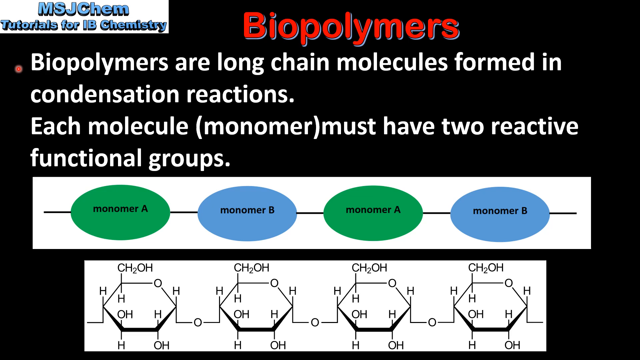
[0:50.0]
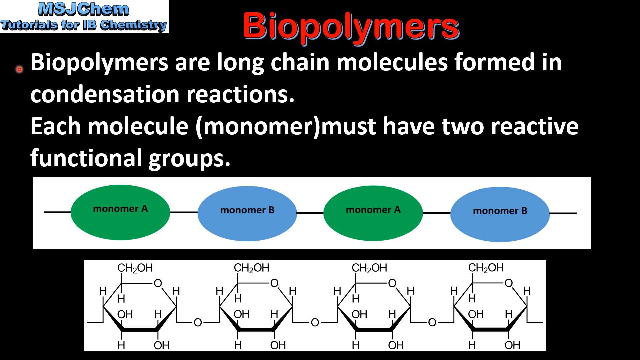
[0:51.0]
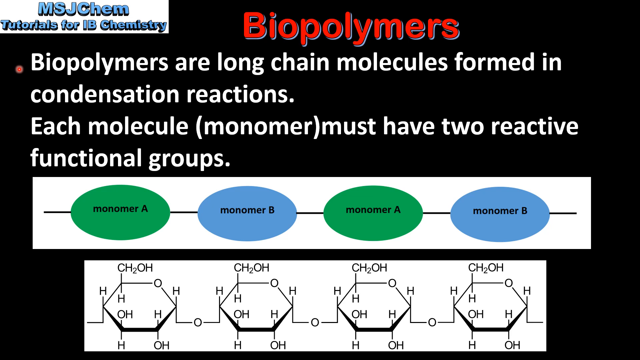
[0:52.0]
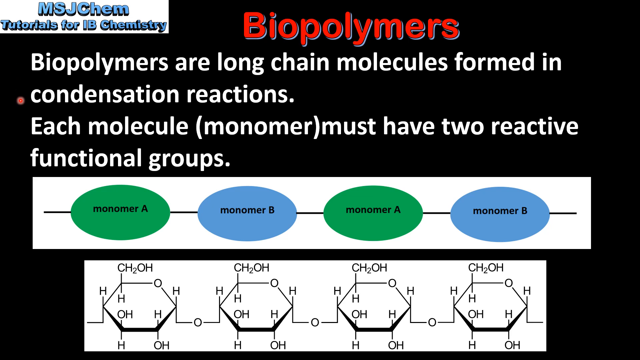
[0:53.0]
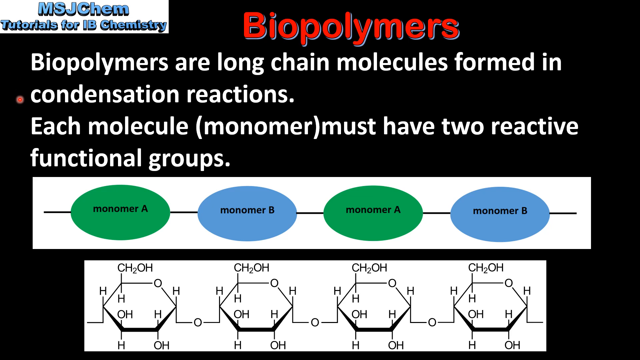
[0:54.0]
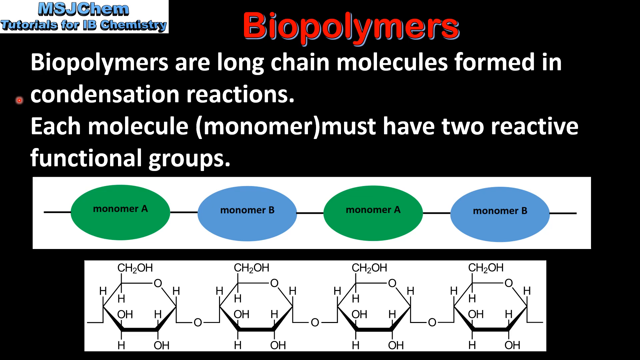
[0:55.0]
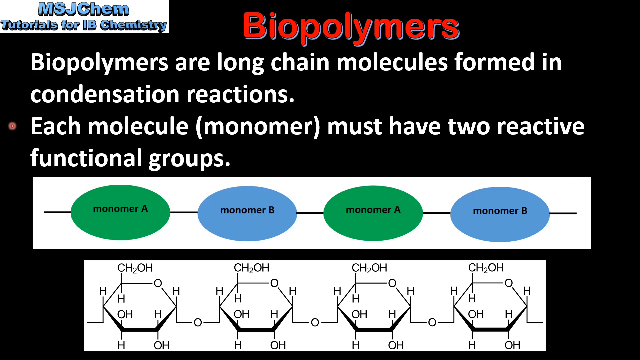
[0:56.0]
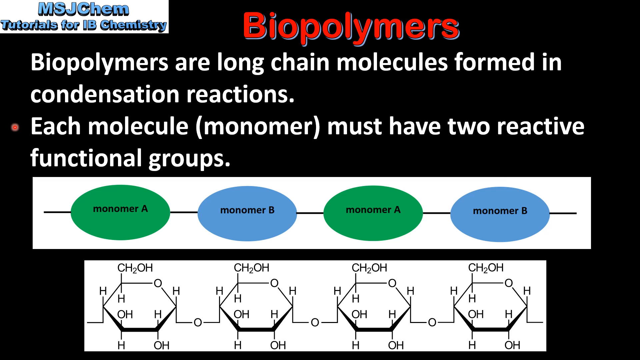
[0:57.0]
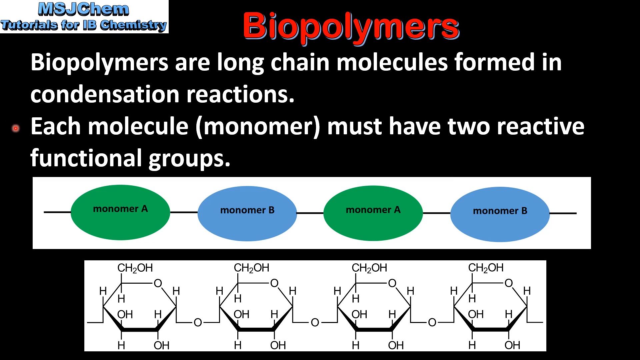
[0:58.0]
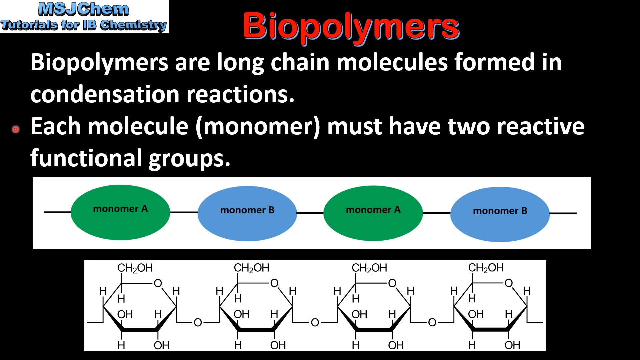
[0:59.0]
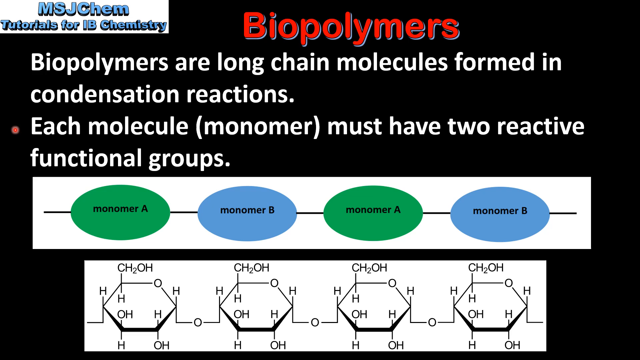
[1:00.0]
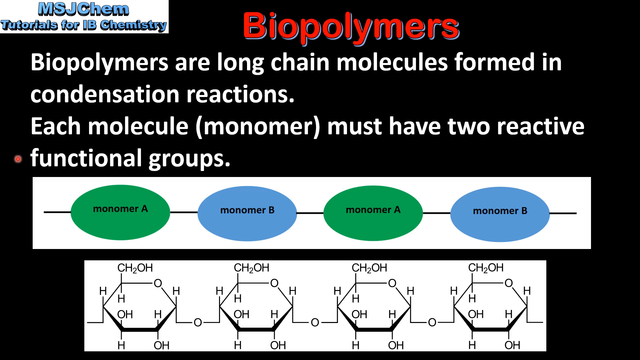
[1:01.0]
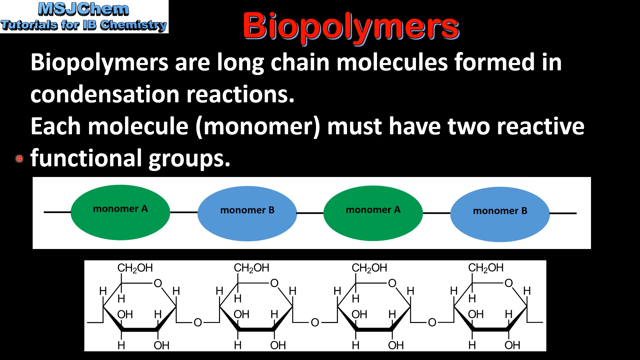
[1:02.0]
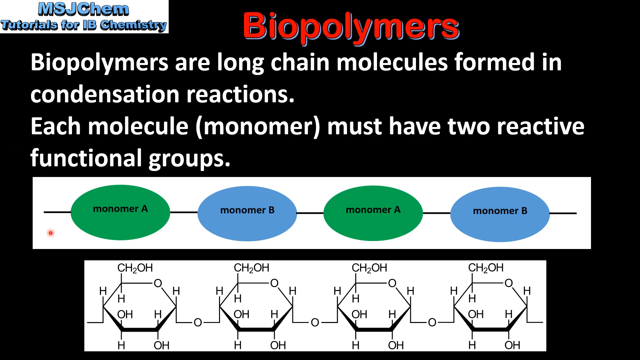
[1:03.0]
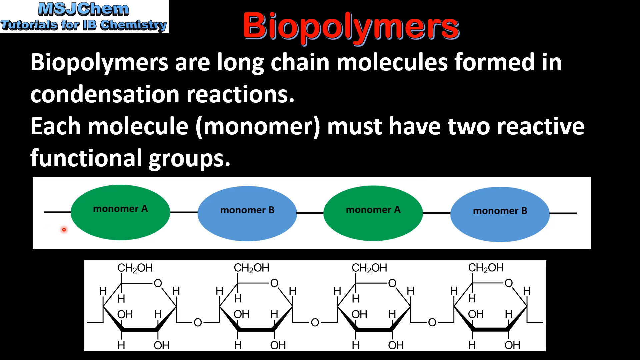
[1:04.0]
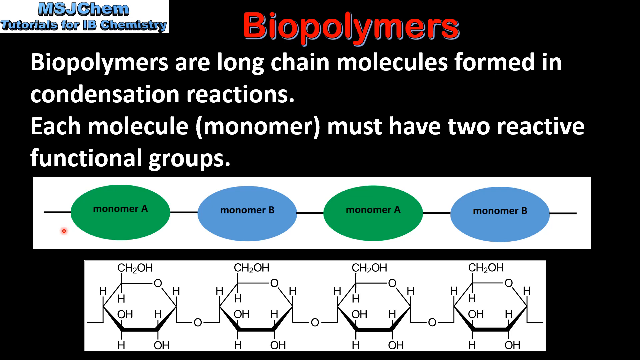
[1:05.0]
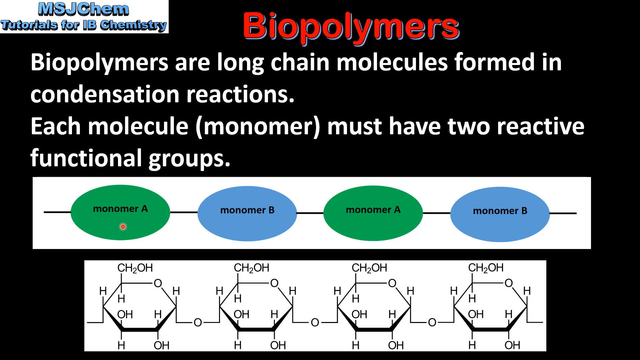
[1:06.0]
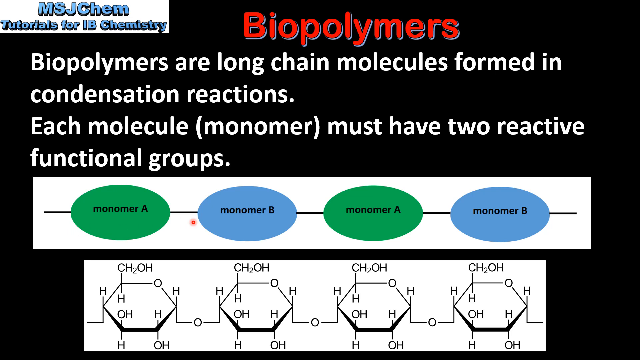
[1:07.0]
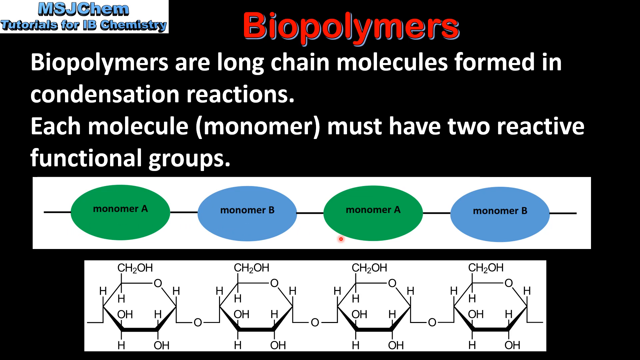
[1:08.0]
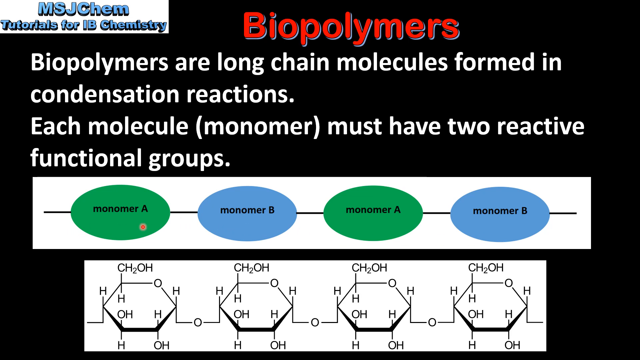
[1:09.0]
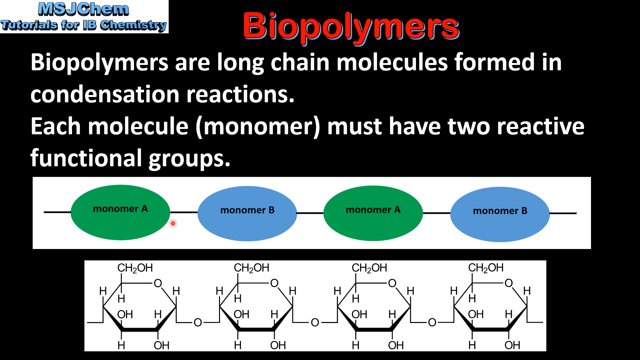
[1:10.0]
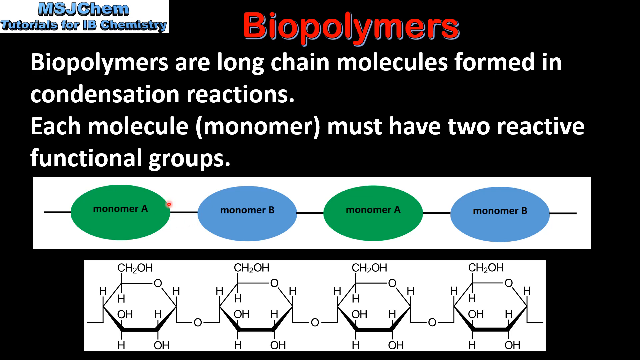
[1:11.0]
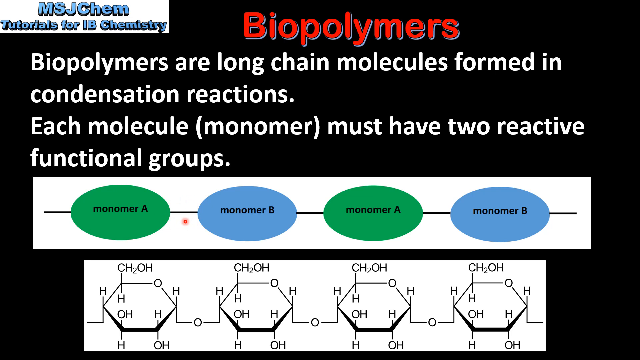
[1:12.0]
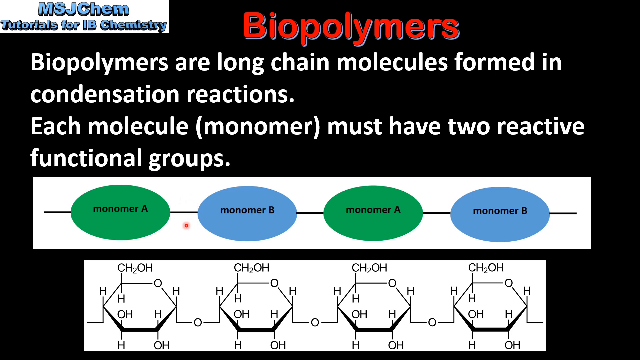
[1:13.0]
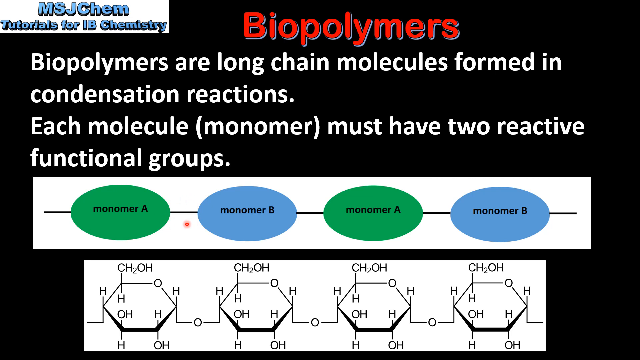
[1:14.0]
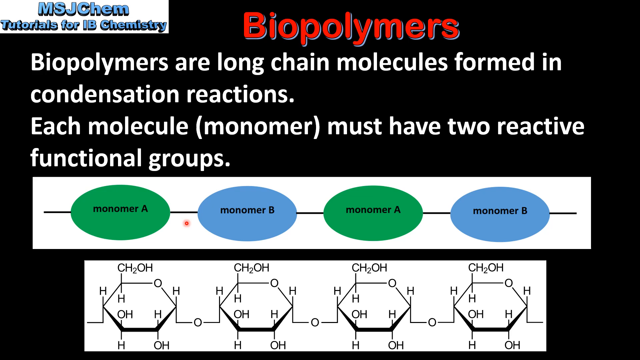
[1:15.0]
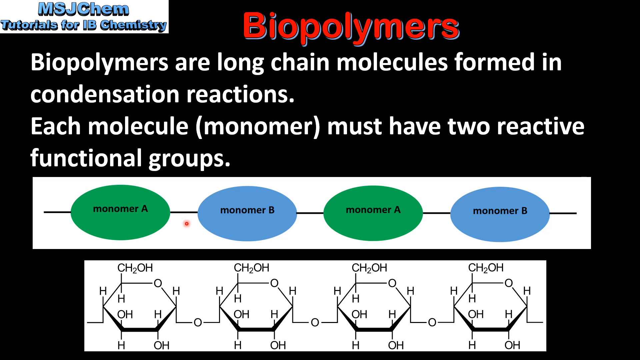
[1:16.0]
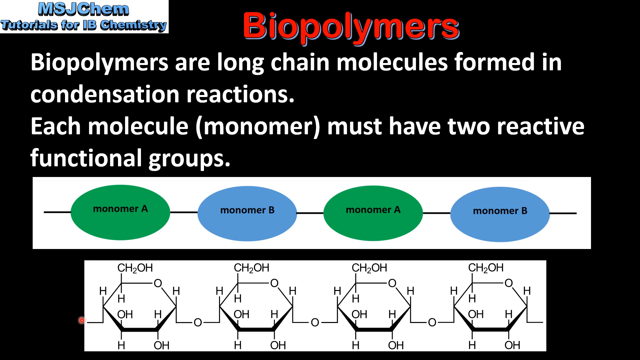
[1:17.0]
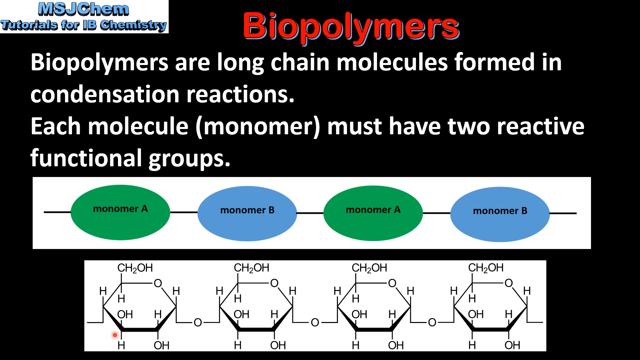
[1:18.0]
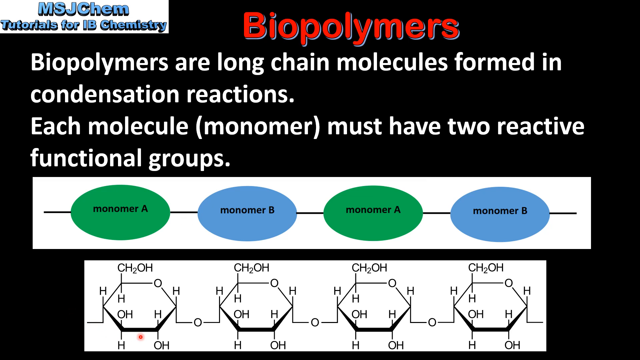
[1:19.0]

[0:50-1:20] On a black background, red text at the top reads "biopolymers," and a small white banner at the top left corner reads "MSJ Chem Tutorials for IB Chemistry." White text reads "biopolymers are long chain molecules formed in condensation reactions. Each molecule monomer must have two reactive functional groups." A very elongated white box has green and blue circles connected by a black line and labeled "monomer A" and "monomer B." A very large white box contains letters that repeat throughout, such as "CH2OH," "HHOH," and "HOHHO." A small red cursor moves to different elements of the screen, and the text "each molecule monomer must have two reactive" is adjusted, apparently because it was not spaced properly.